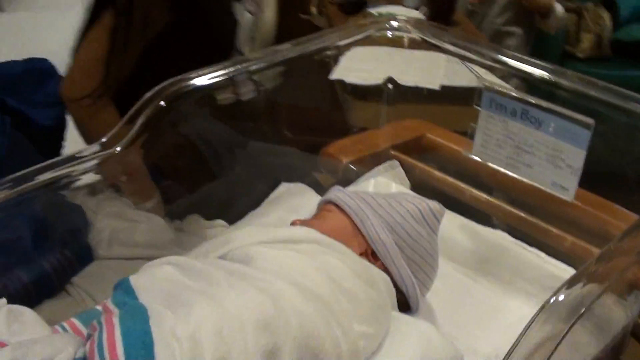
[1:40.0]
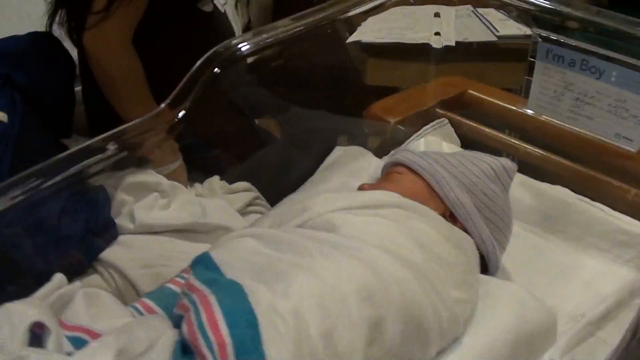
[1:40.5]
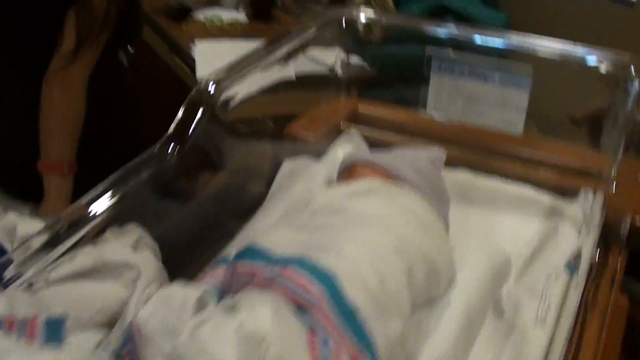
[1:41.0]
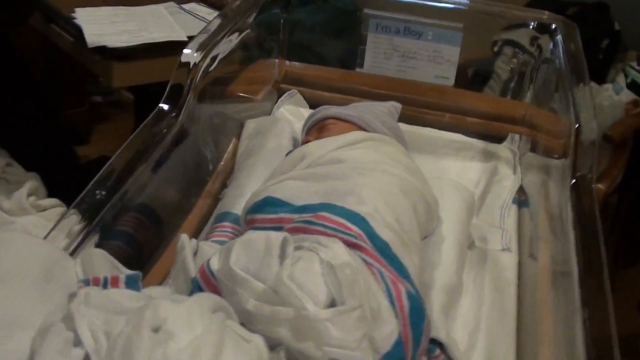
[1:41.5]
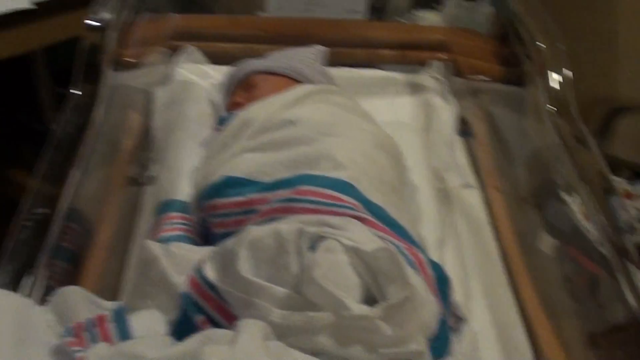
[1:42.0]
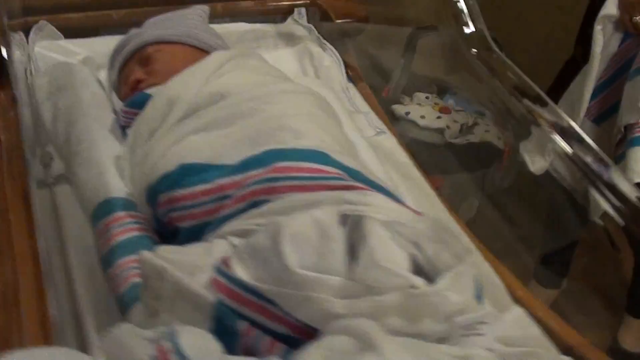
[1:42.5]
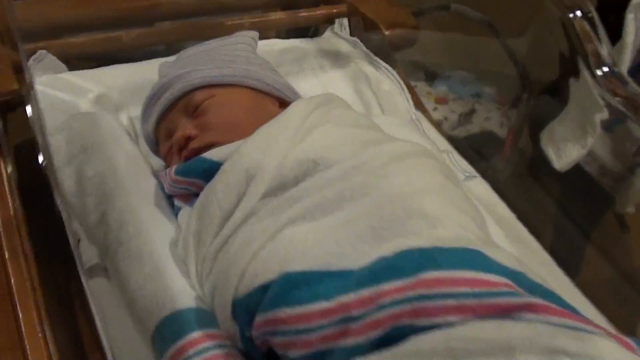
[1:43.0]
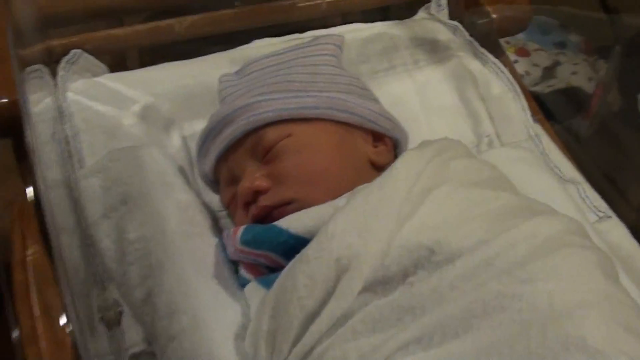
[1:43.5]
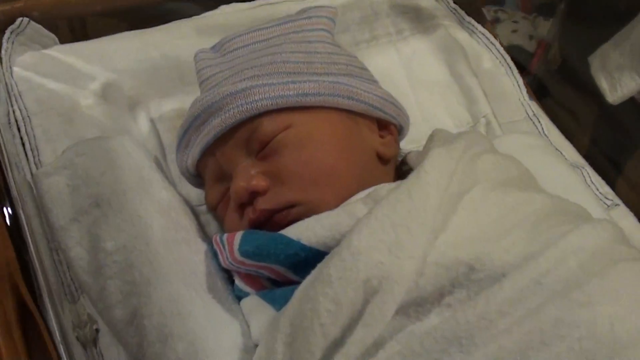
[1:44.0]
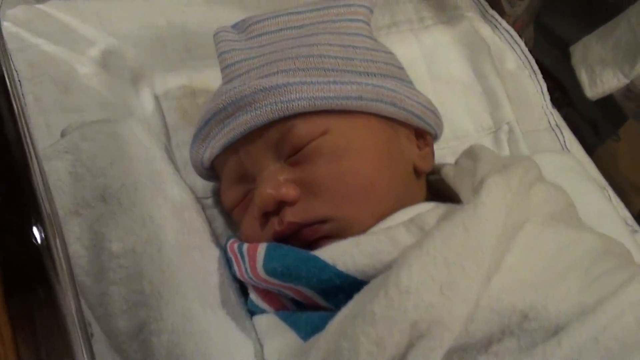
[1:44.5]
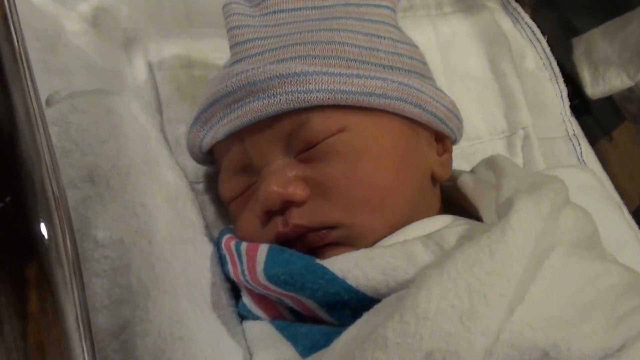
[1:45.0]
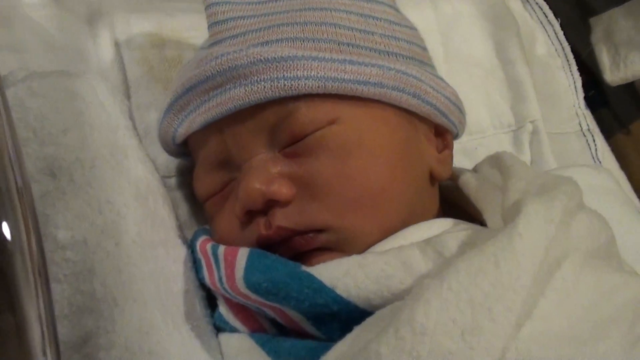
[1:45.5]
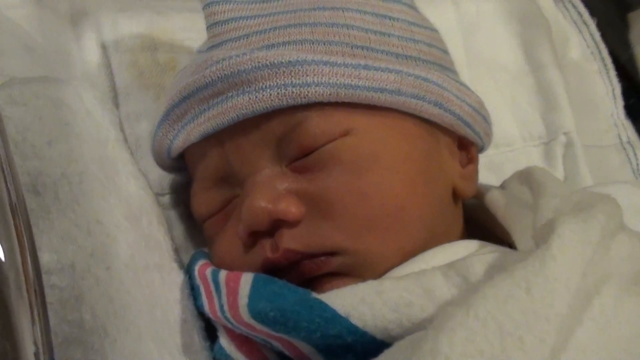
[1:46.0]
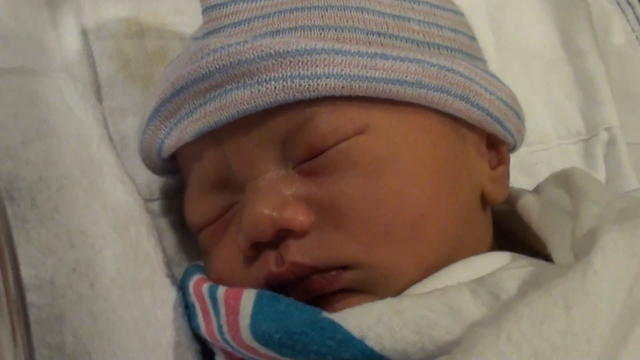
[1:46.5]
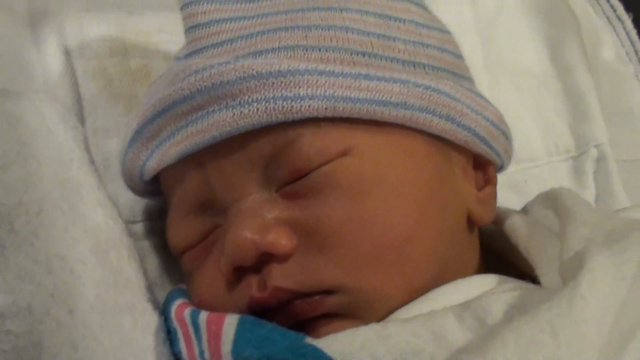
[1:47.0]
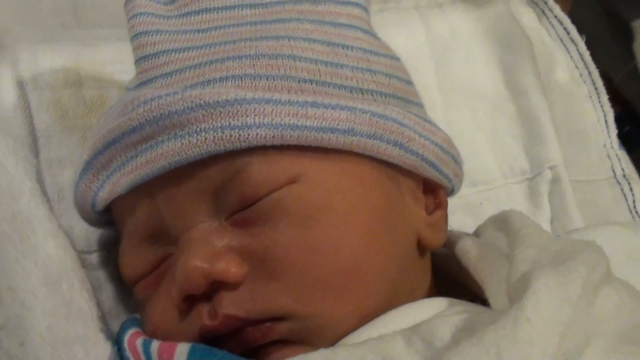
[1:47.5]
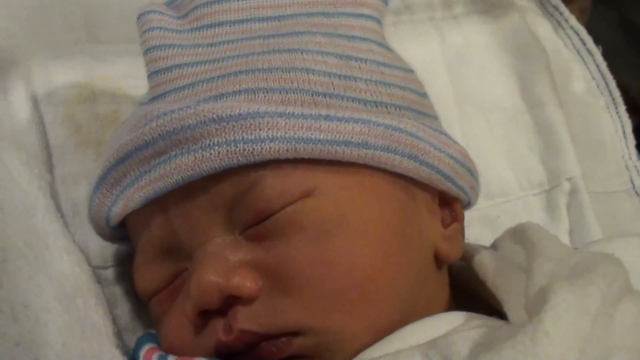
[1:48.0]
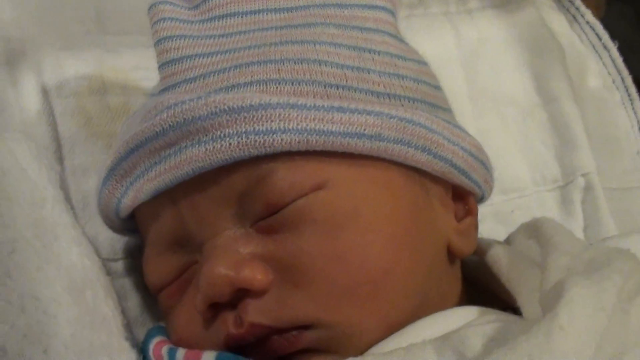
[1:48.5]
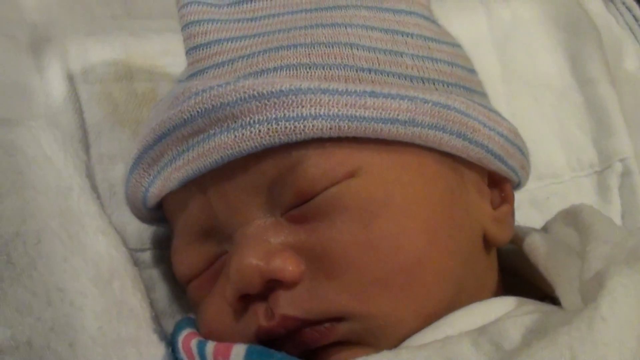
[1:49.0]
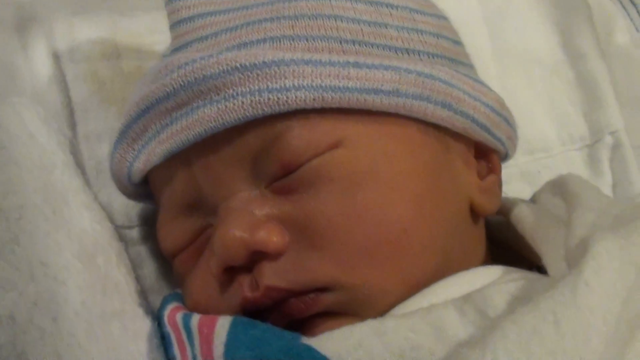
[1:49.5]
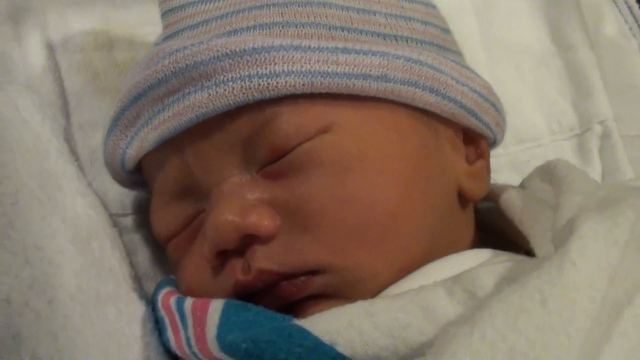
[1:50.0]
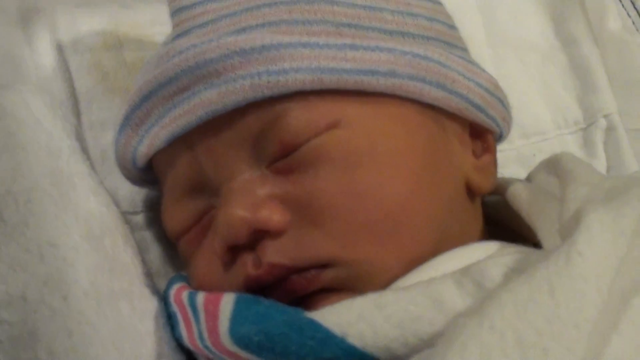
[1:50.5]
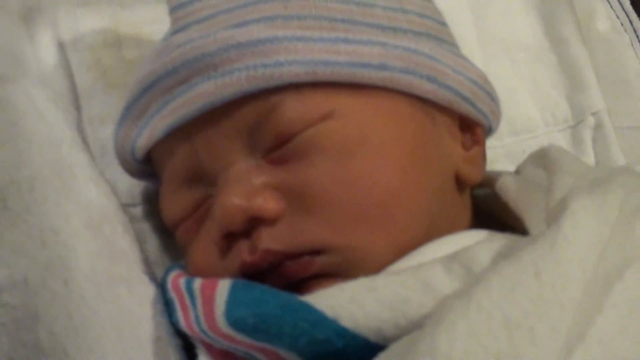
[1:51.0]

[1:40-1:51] The baby is asleep in the plastic bassinet, small, head turned to the right, wearing a white hat with pink and blue stripes and wrapped in a blanket with pink and blue stripes. A sign behind the baby on the bassinet has several lines of text, including "I'm a boy", and likely lists the baby's information such as name and birth weight. The camera zooms in around and up to a very close view of the baby's face, where the baby is fast asleep and its mouth moves just a little.